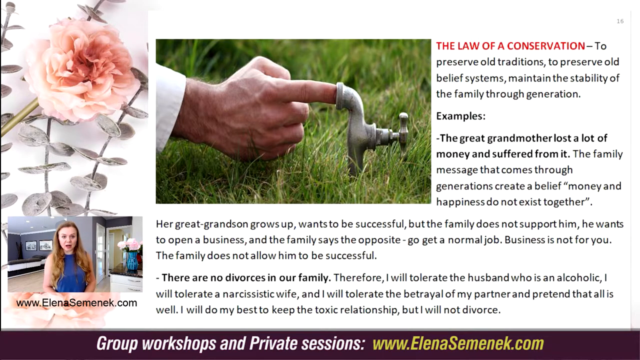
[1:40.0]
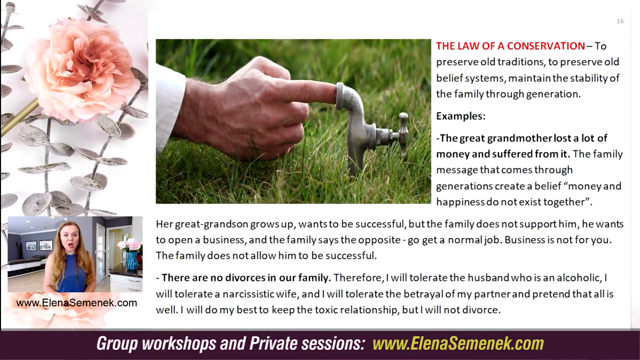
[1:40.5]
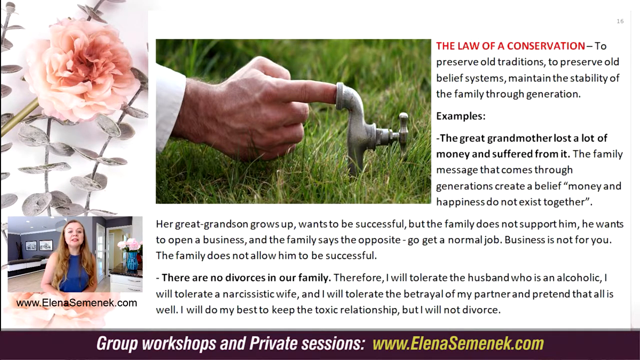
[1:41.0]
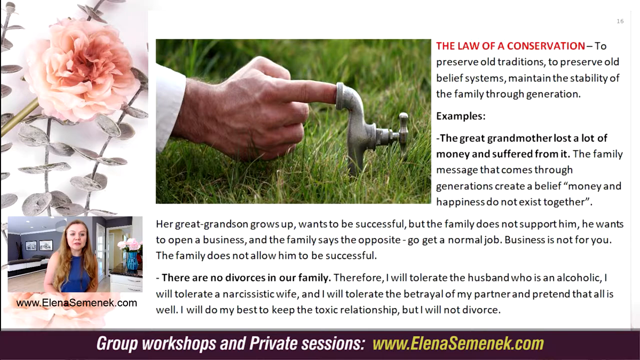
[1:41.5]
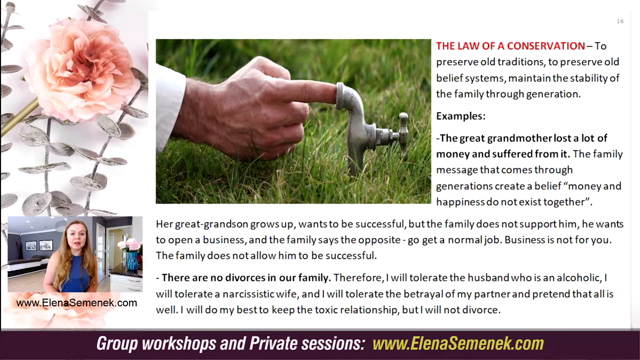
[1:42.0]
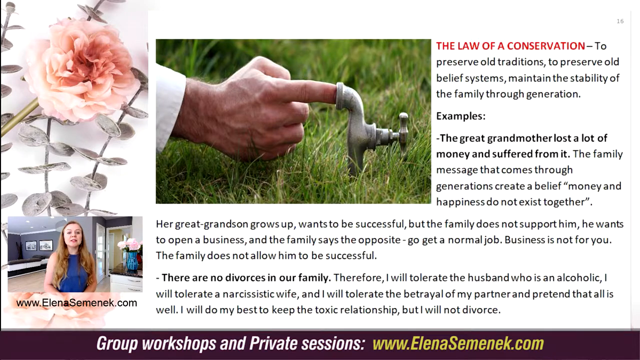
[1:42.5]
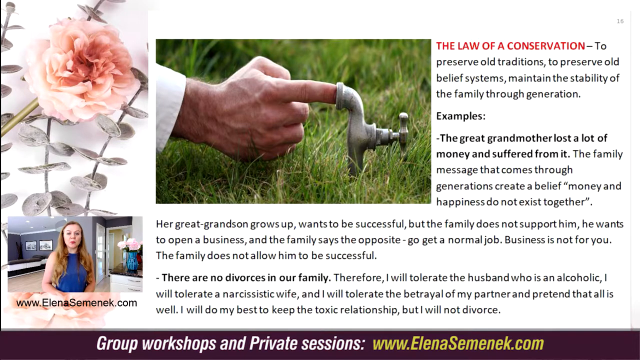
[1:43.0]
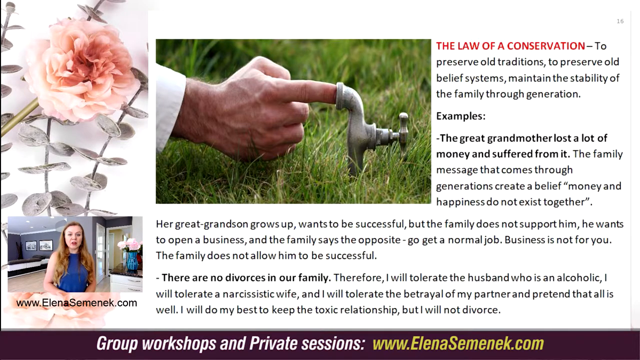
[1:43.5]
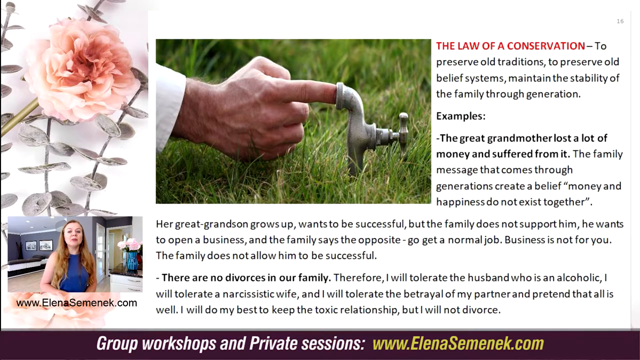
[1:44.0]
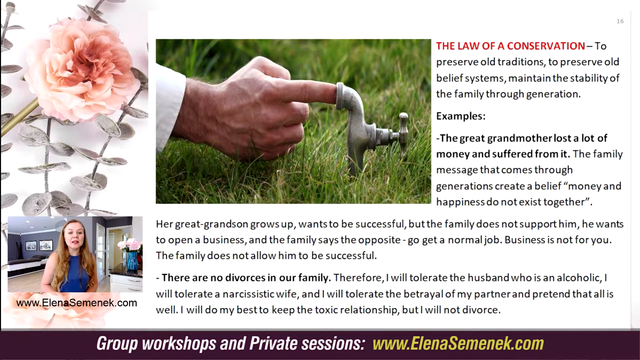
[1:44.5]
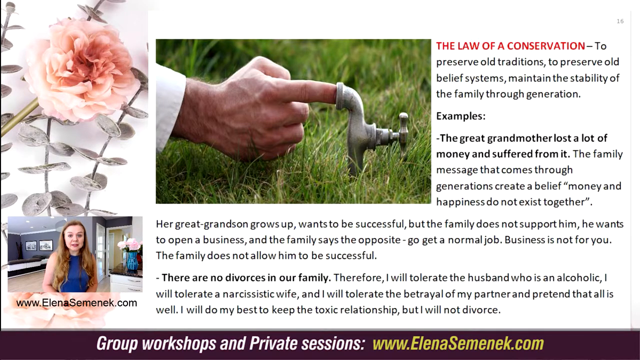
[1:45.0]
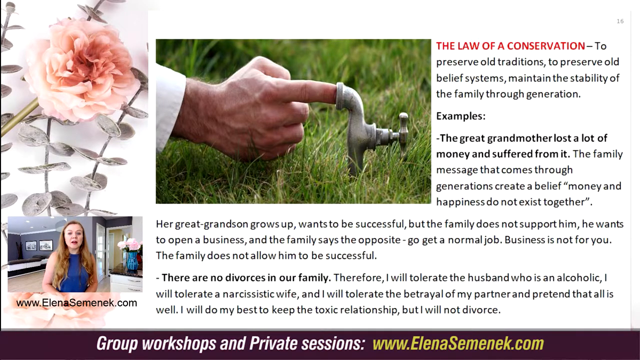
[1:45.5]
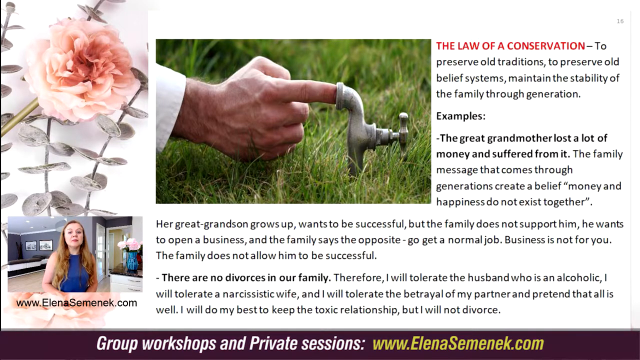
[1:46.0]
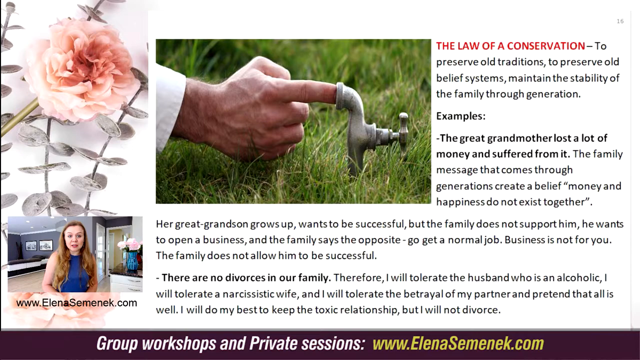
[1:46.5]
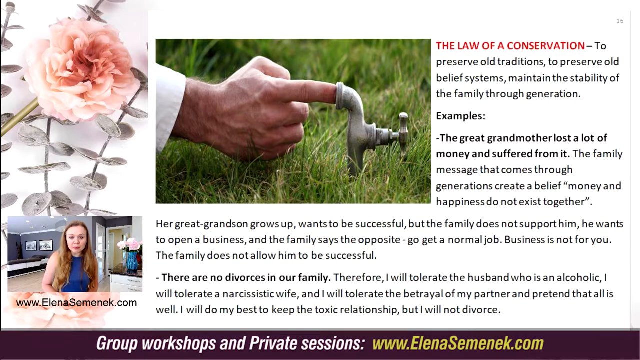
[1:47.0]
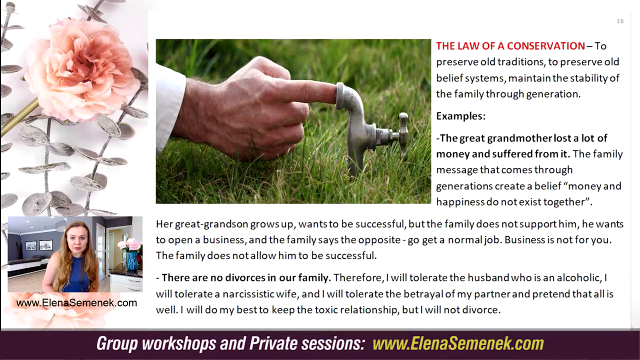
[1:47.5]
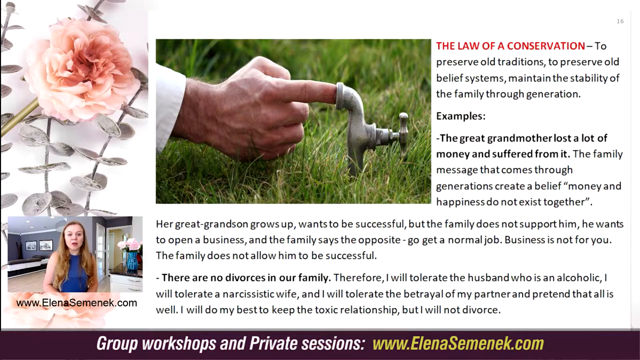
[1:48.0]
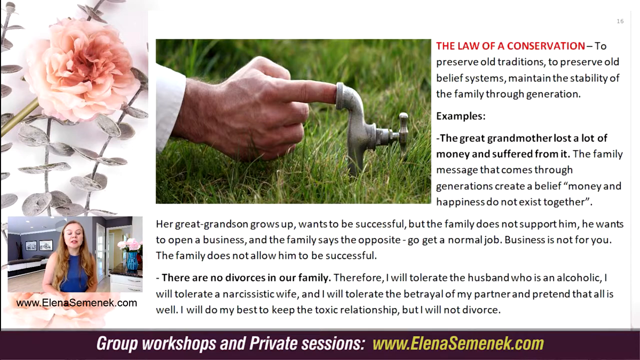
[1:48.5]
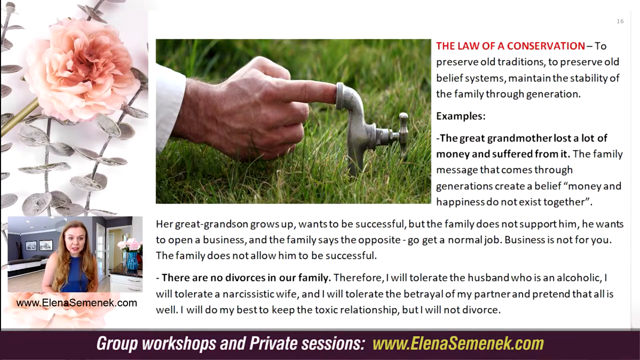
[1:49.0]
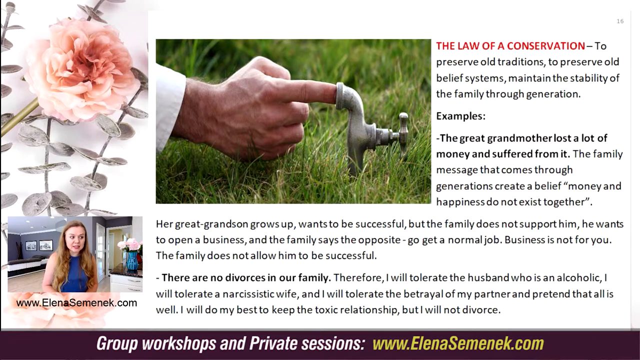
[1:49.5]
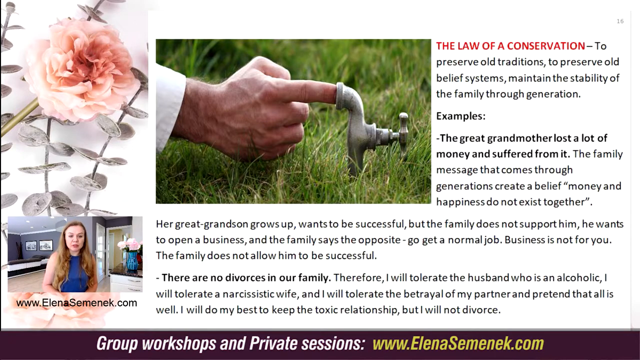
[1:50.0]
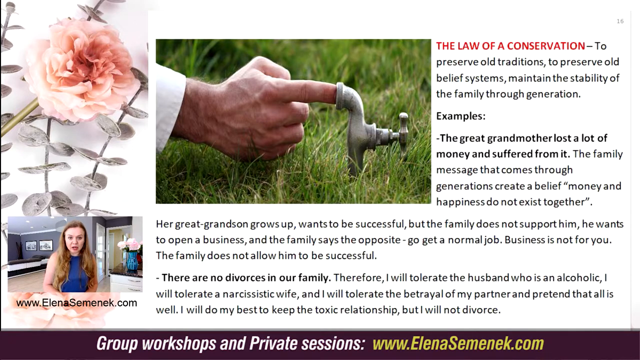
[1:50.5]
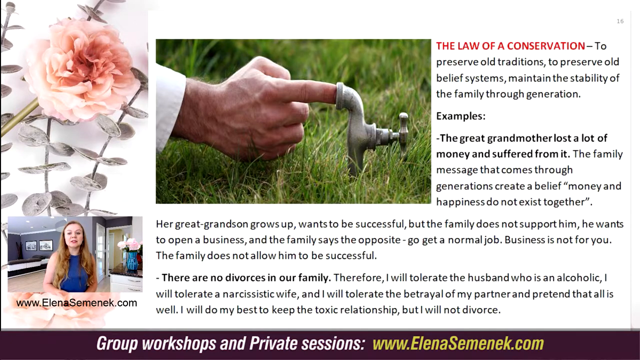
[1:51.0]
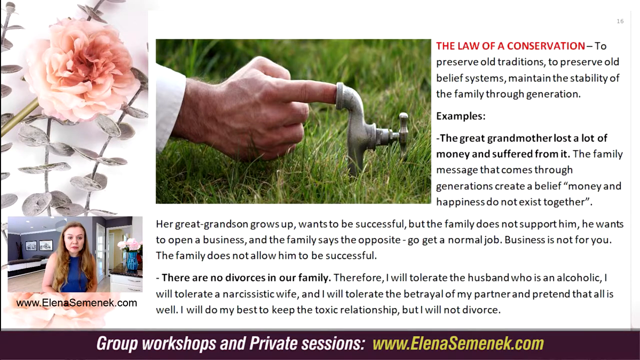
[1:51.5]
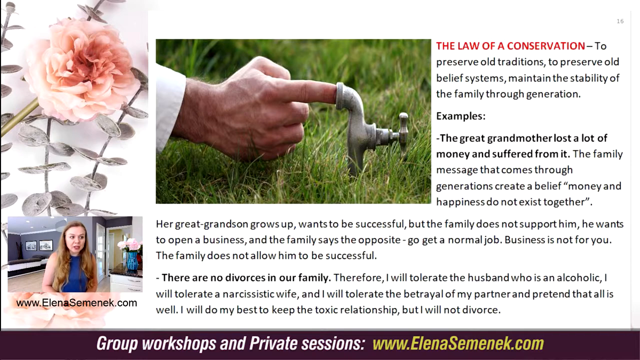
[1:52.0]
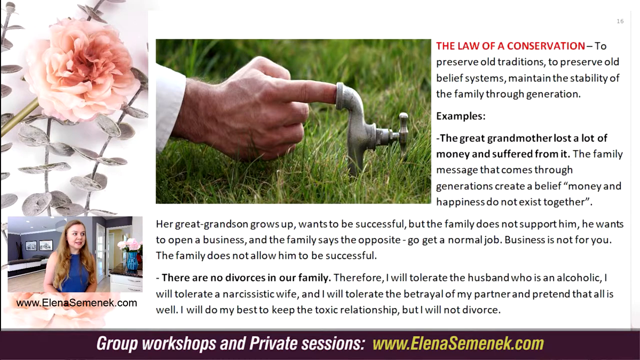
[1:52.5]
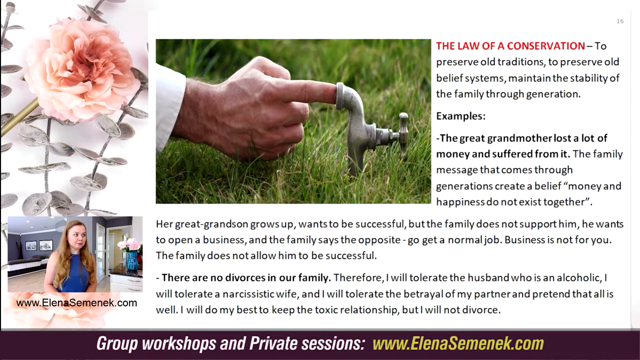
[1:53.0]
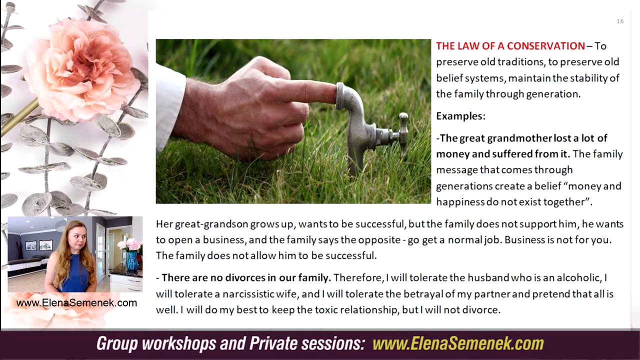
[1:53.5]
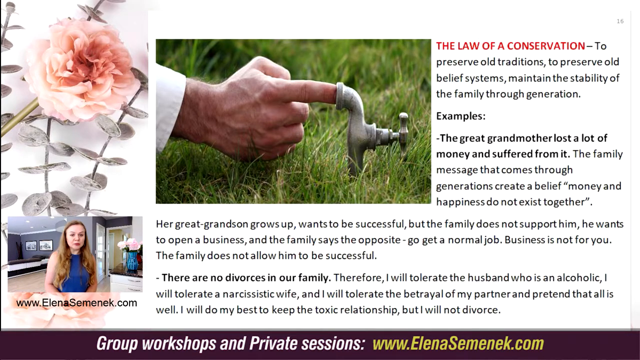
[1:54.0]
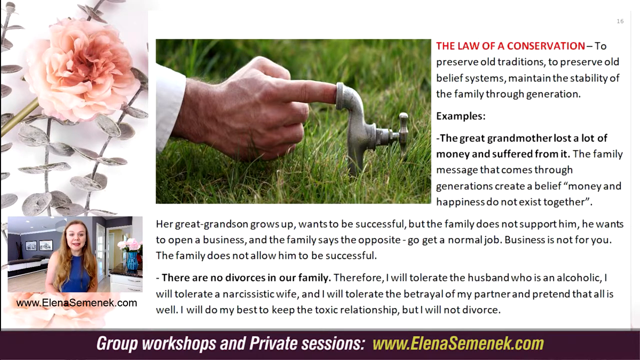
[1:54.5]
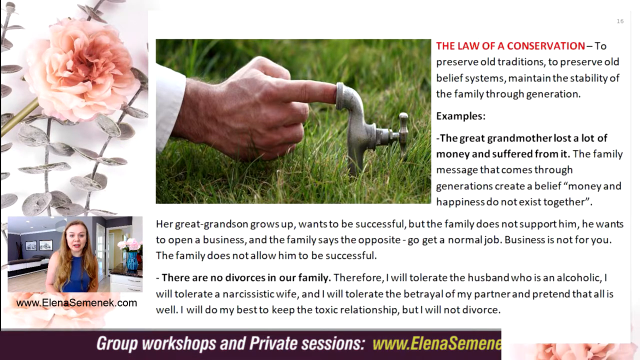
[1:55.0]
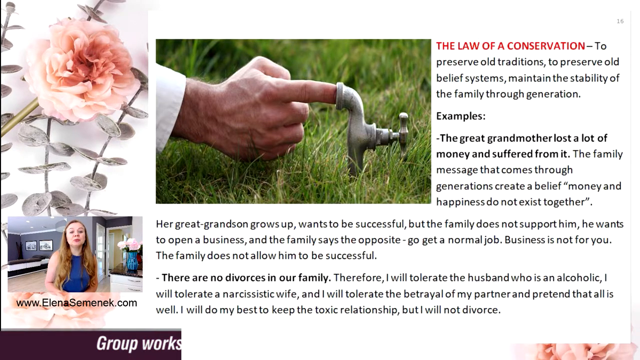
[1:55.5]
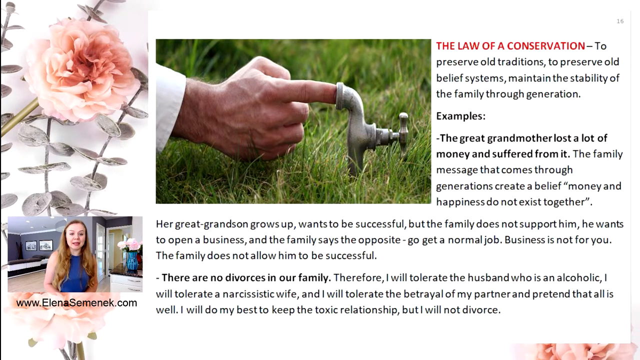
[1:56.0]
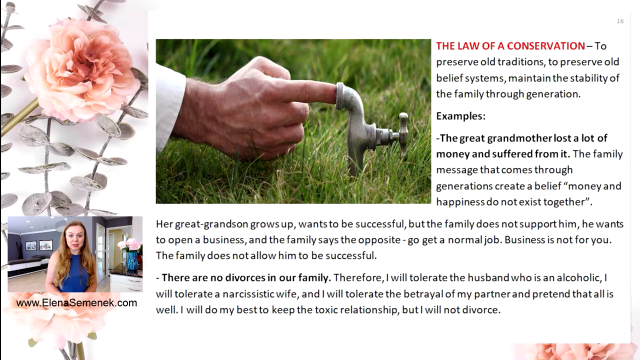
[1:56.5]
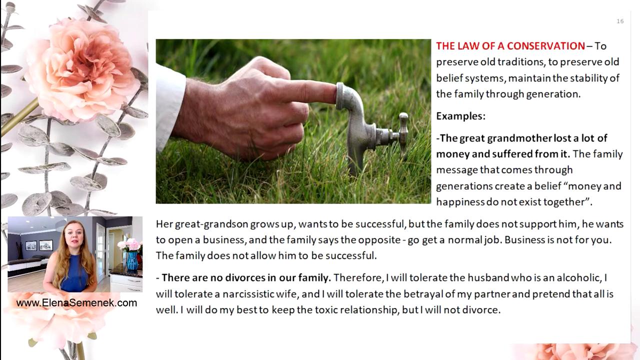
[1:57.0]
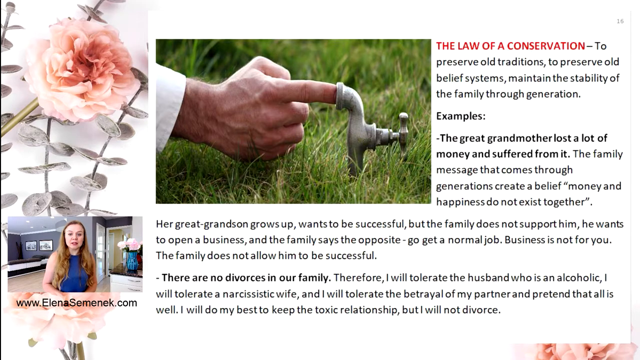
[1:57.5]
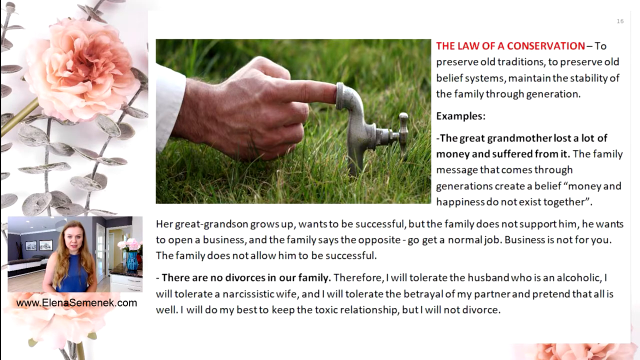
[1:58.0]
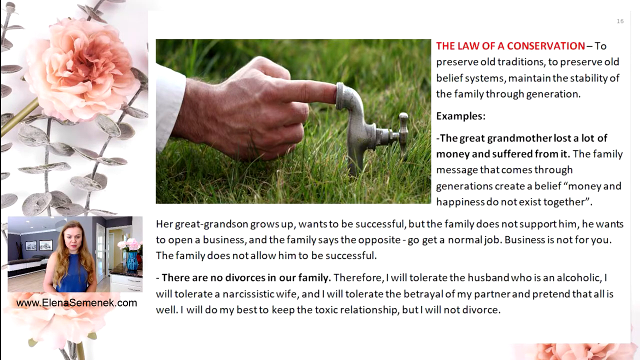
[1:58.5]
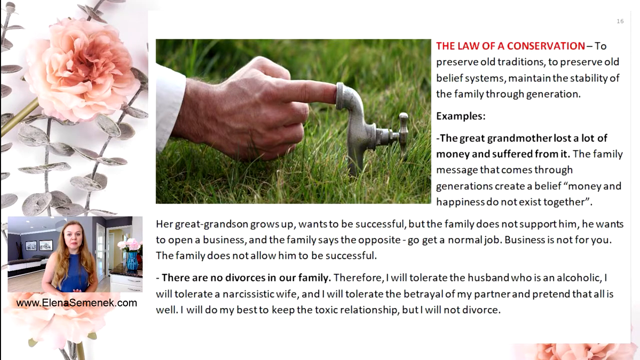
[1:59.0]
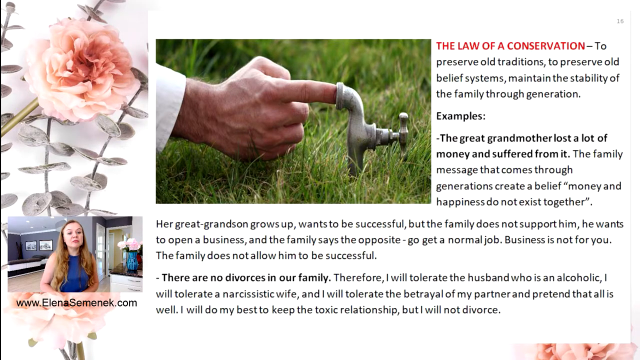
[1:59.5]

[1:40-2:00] Nothing significant changes; the lady continues to speak, and her body language shows nothing different. The last paragraph on the slide concerns a toxic relationship in which one partner decides not to seek divorce and instead endures the suffering.